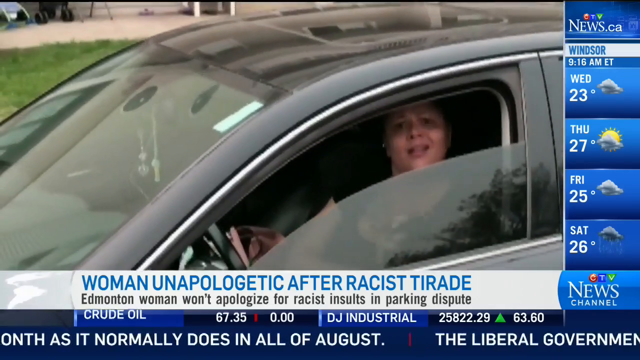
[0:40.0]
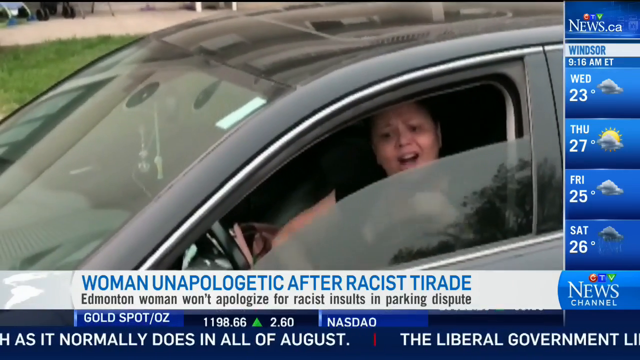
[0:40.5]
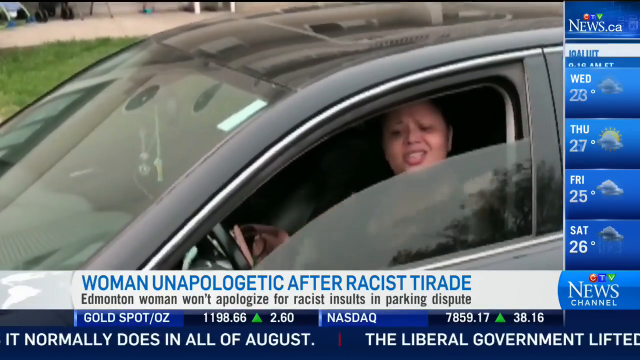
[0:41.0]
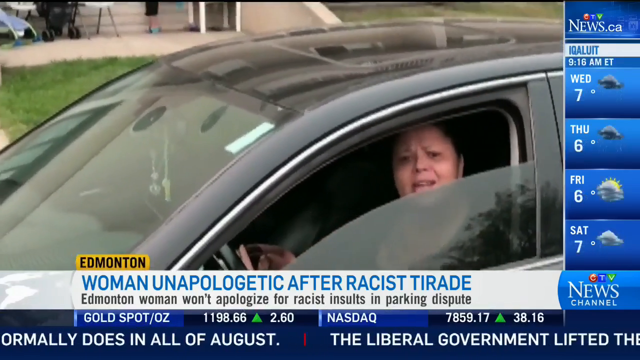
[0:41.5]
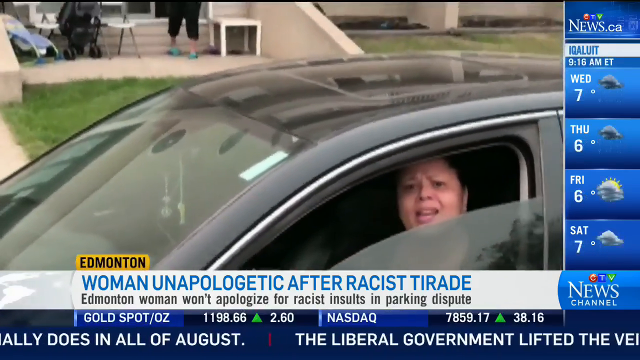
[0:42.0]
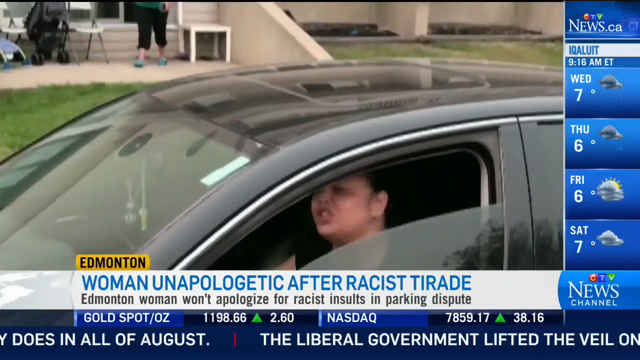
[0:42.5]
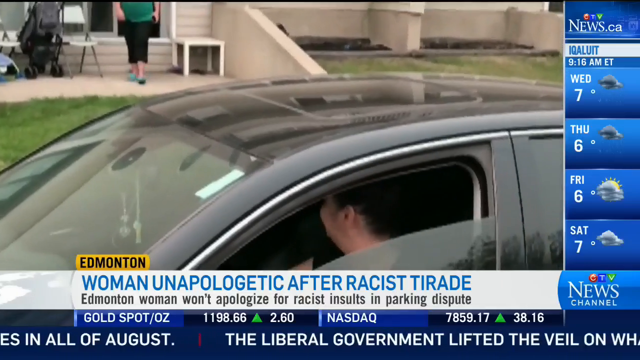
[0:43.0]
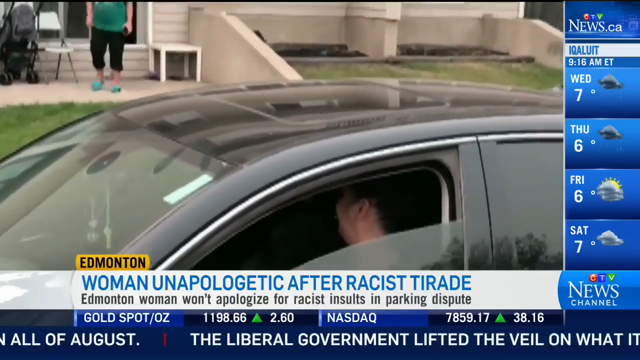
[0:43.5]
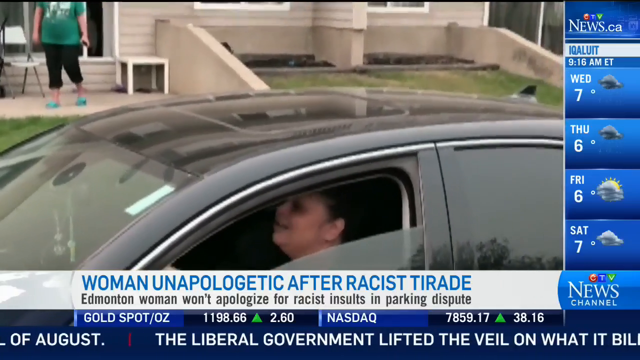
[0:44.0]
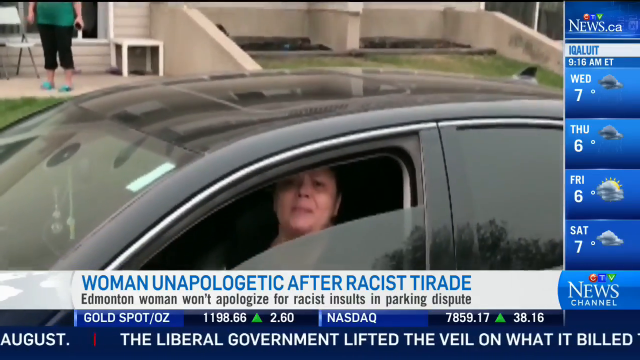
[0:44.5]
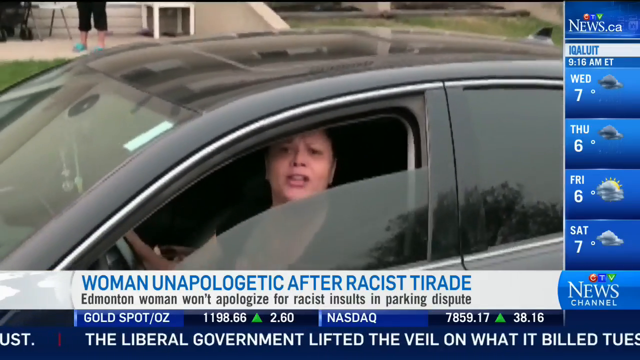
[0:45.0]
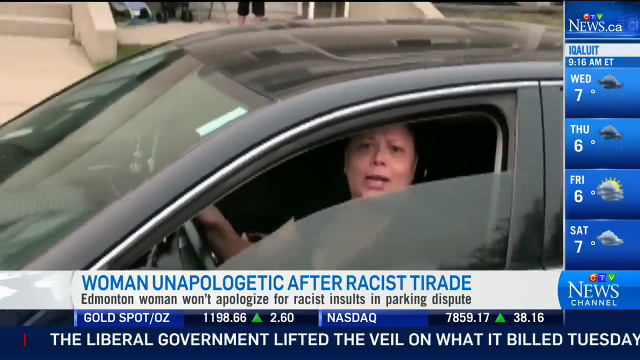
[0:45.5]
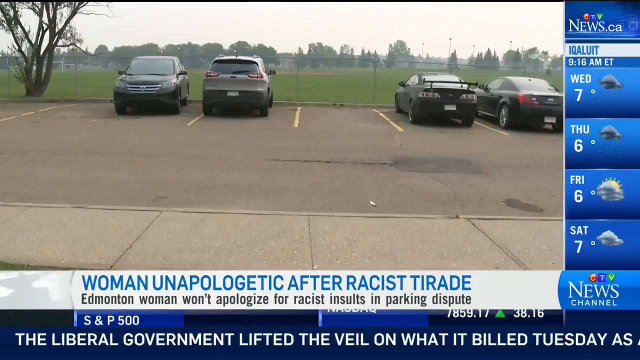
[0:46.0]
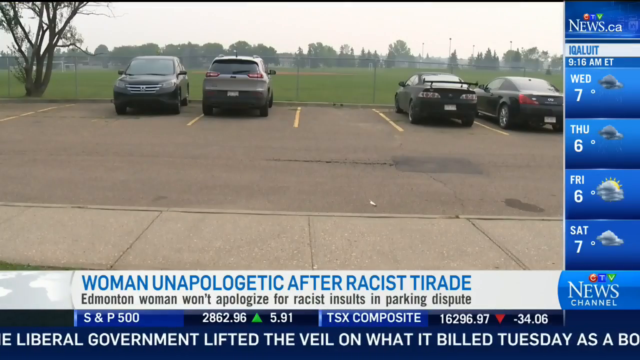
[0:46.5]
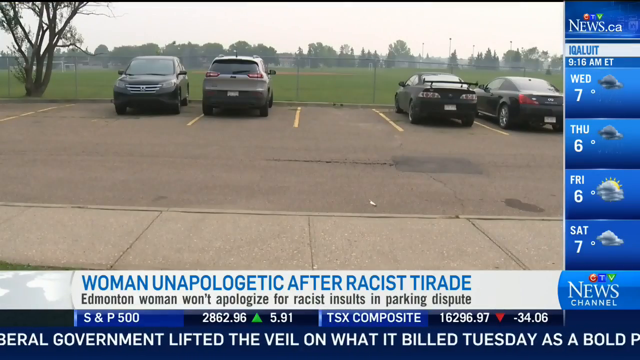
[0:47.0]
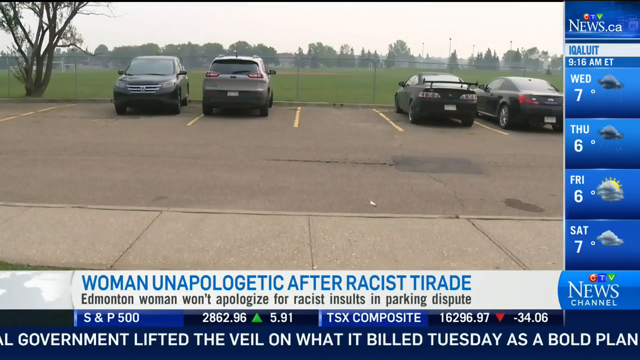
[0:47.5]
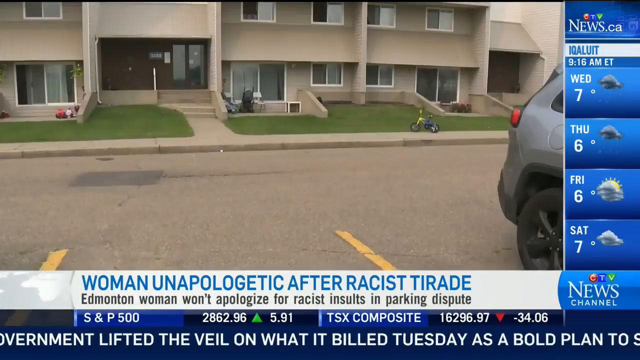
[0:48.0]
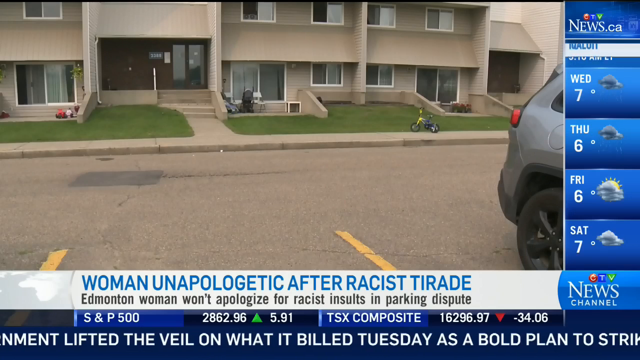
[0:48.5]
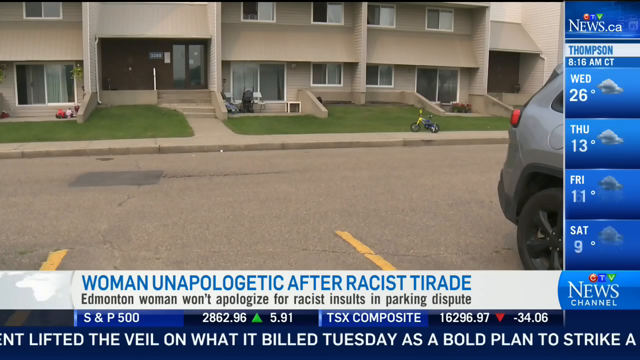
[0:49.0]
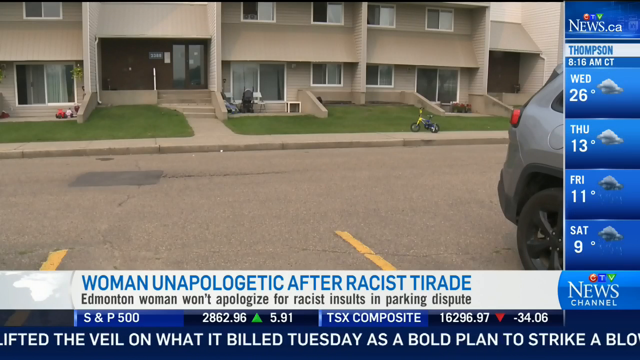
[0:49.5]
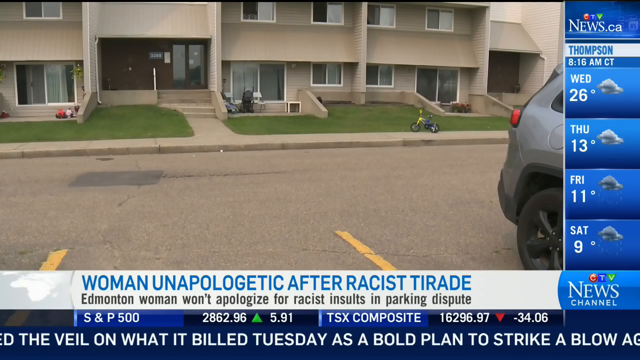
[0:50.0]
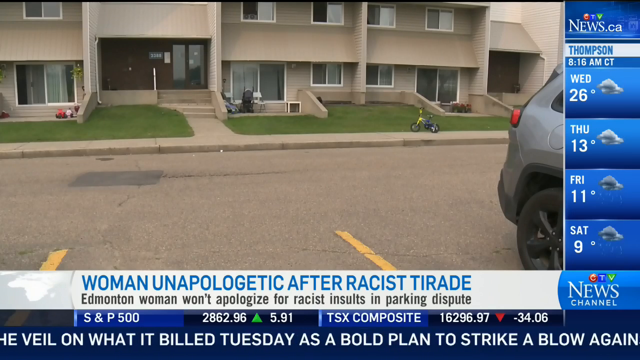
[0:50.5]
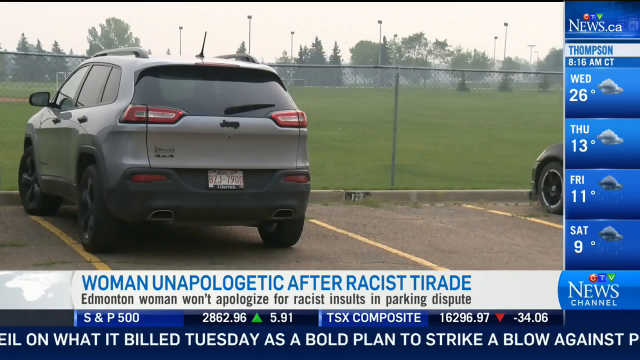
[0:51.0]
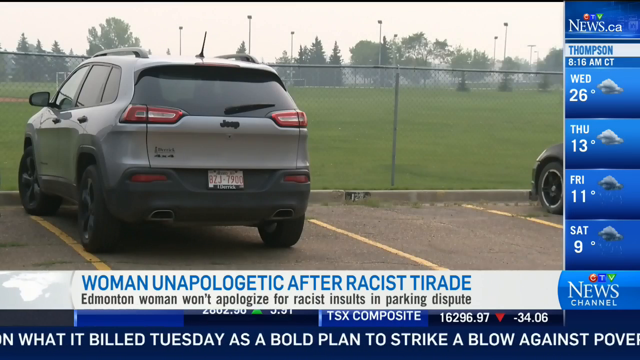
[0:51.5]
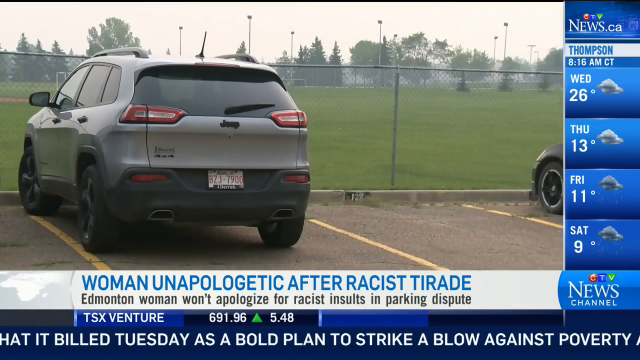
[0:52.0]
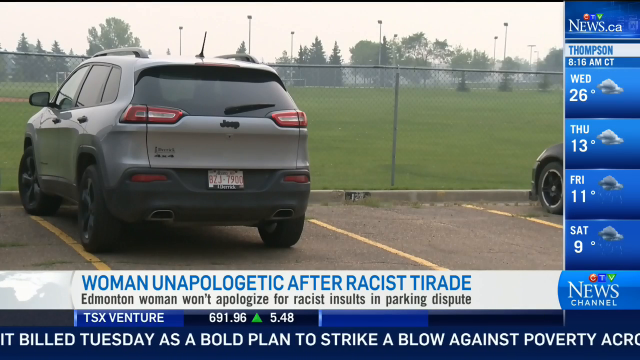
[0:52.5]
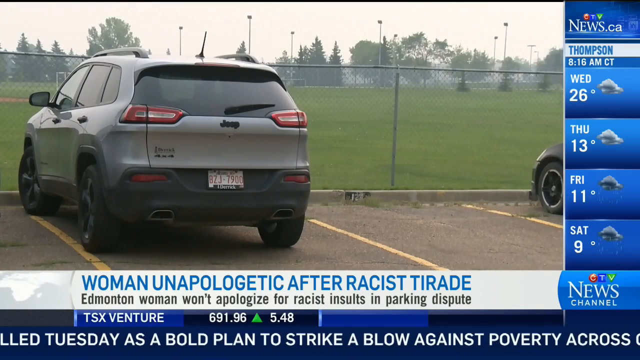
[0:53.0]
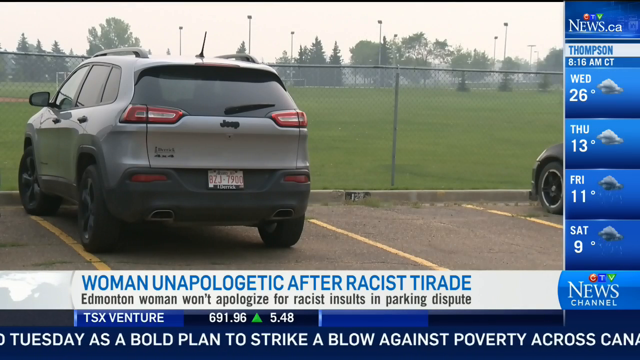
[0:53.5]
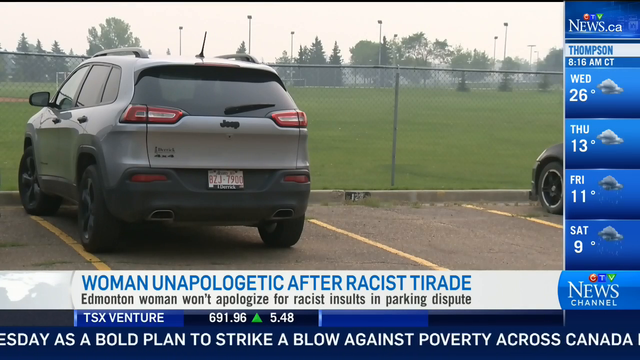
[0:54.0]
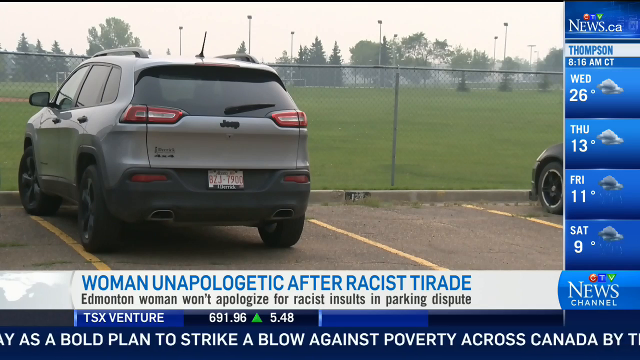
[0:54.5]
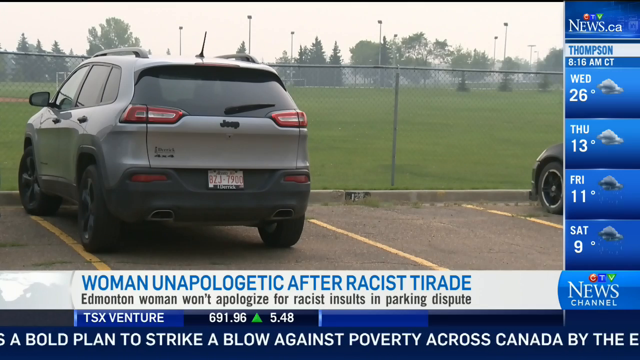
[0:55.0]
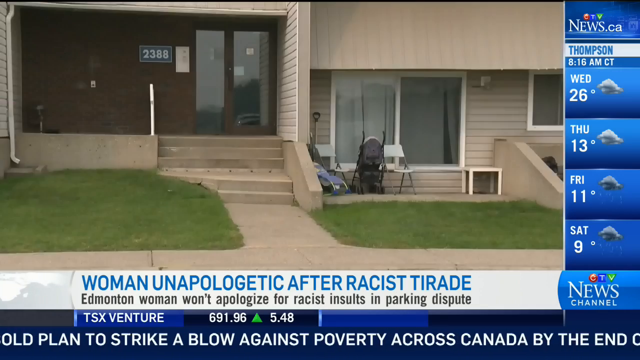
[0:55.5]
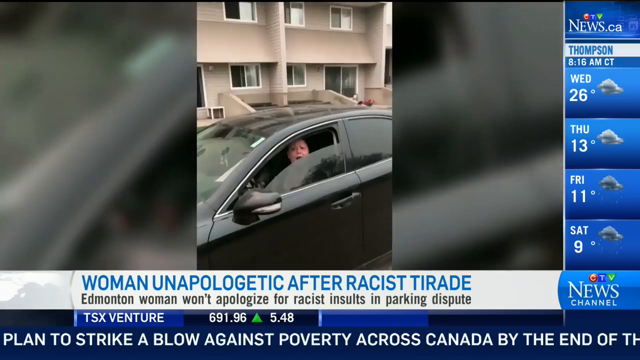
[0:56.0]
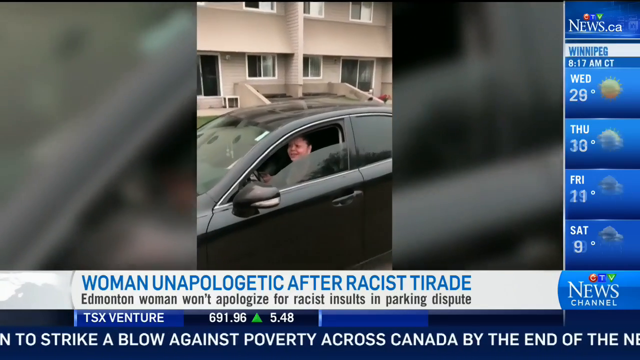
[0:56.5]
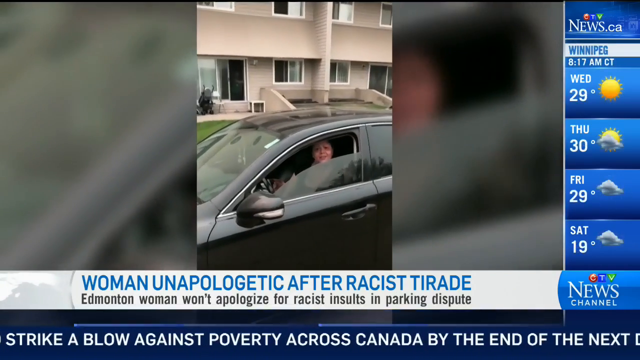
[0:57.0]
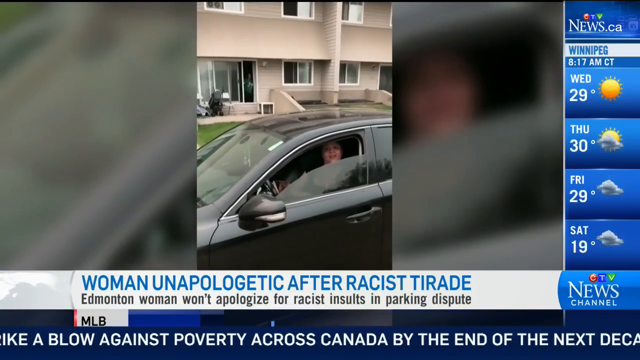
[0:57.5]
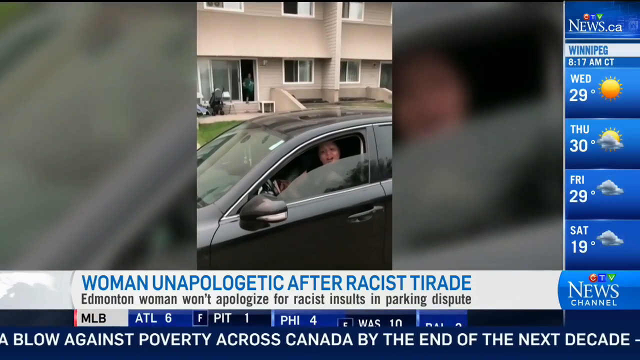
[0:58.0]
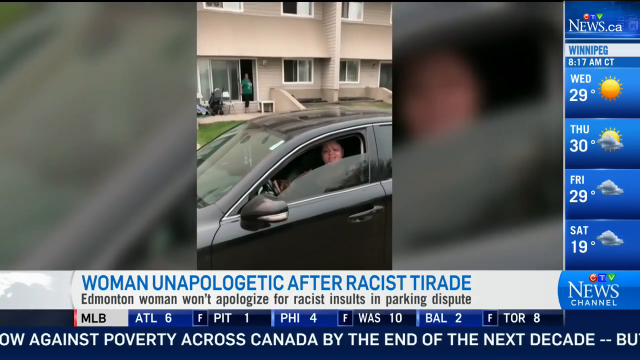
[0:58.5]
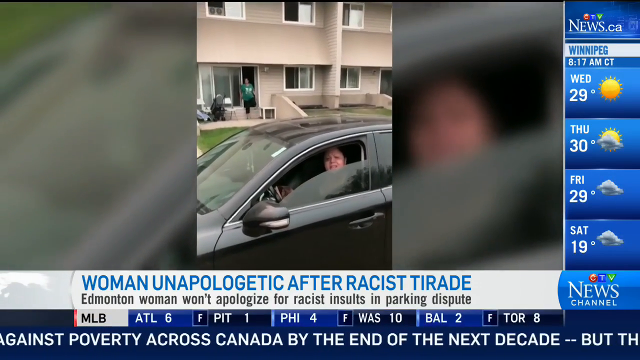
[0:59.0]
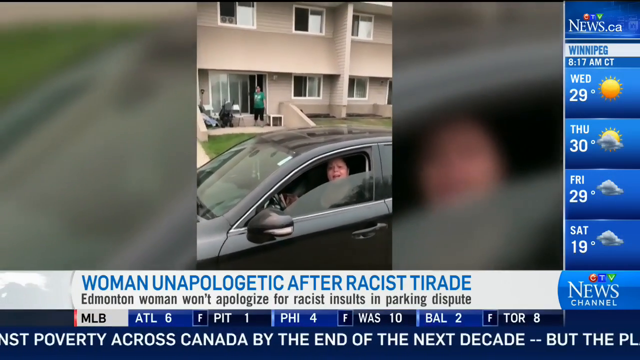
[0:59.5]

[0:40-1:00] Footage shows a woman in a vehicle who seems somewhat surprised, her eyes looking a bit worried, as she starts to roll up her window. Another person in the background wears a green top, pants that go a little past the knees, and green shoes, and there looks to be a baby carriage next to that person. The woman in the car turns toward the camera, seemingly yelling, and tries to pull off. The video then shows a parking lot with four cars visible and no one outside. The camera pans around the area, showing buildings with still nobody around, and a jeep behind. Then a phone-view video shows the woman getting disgruntled.